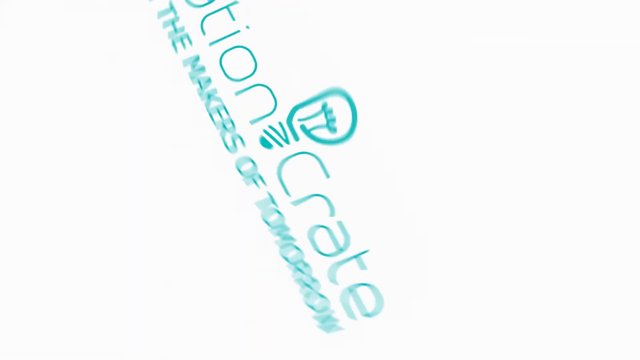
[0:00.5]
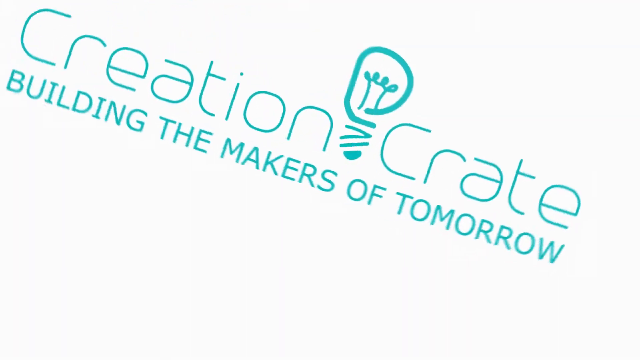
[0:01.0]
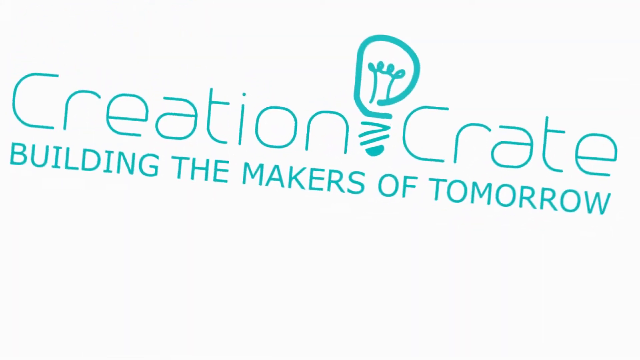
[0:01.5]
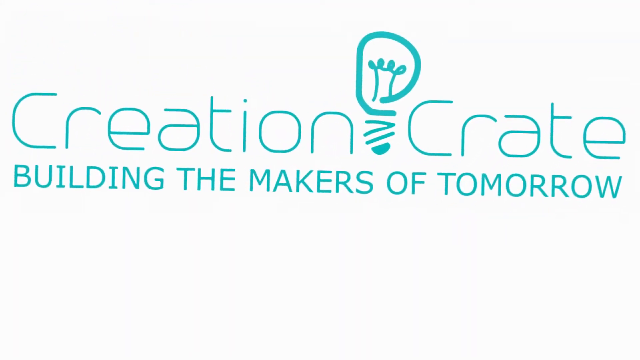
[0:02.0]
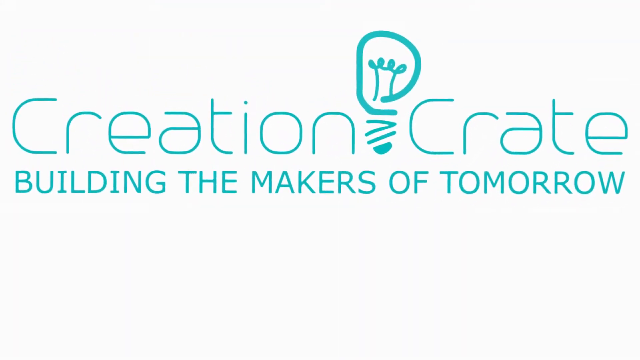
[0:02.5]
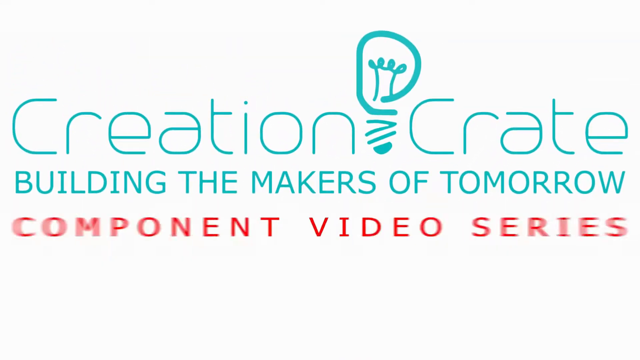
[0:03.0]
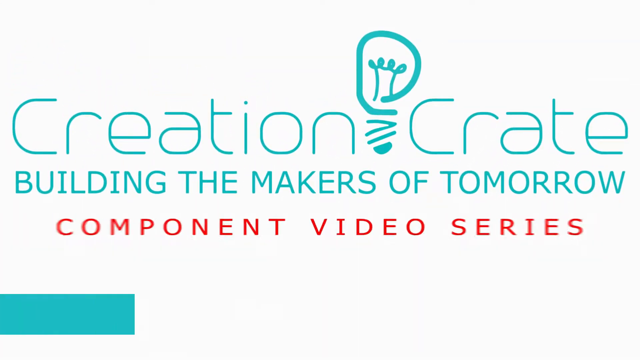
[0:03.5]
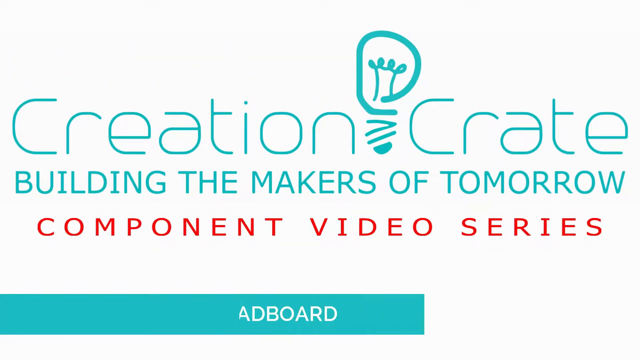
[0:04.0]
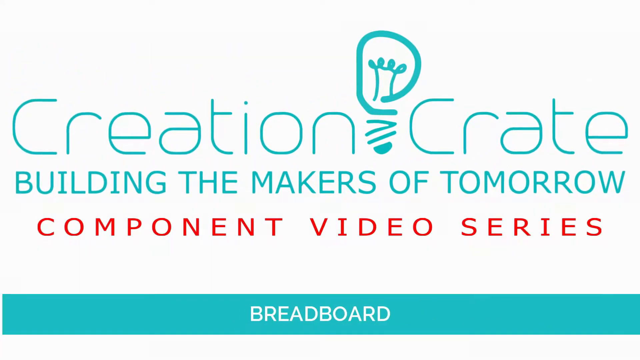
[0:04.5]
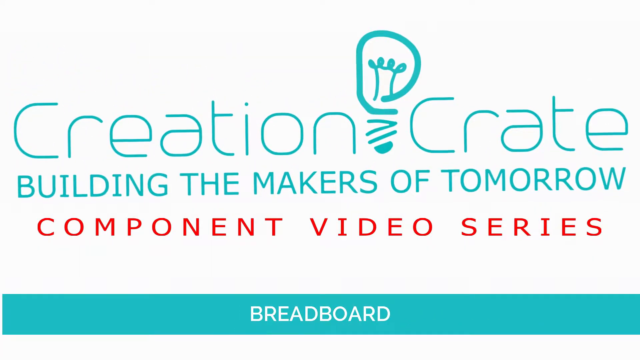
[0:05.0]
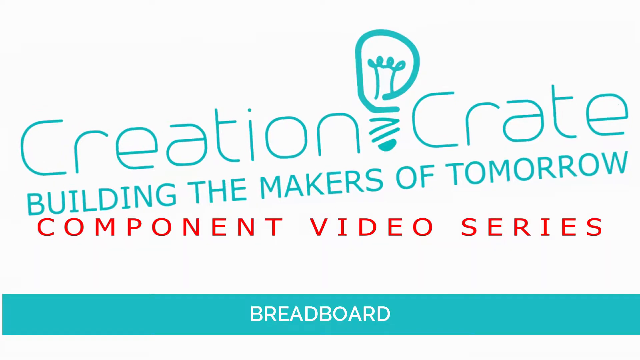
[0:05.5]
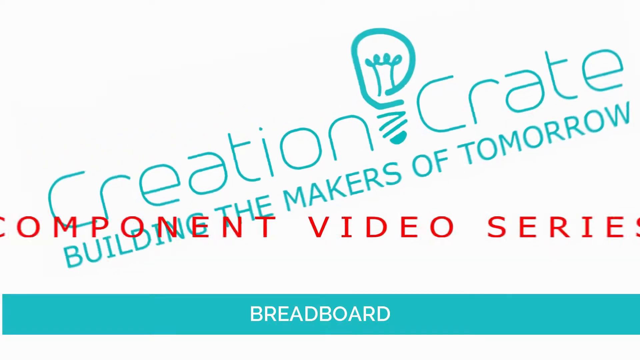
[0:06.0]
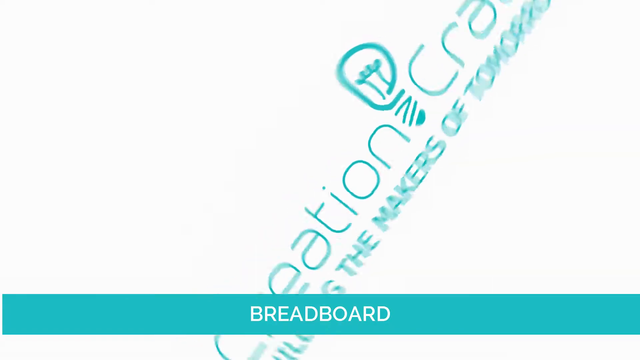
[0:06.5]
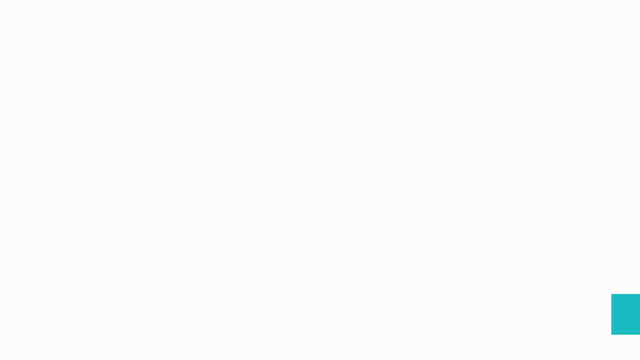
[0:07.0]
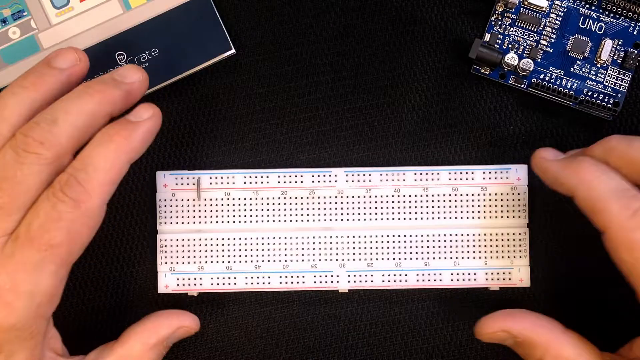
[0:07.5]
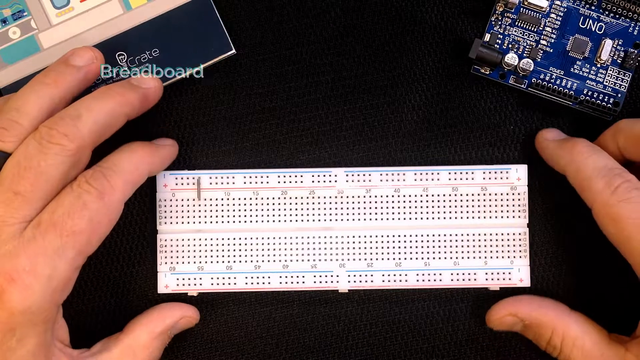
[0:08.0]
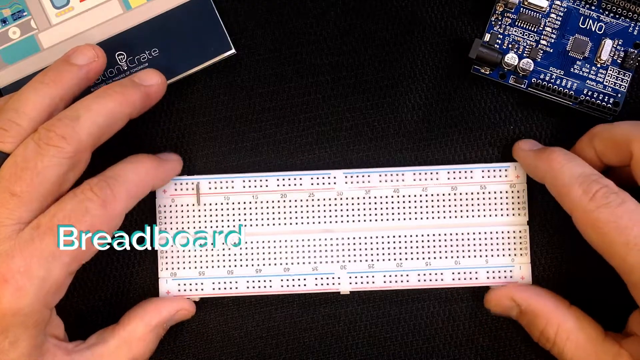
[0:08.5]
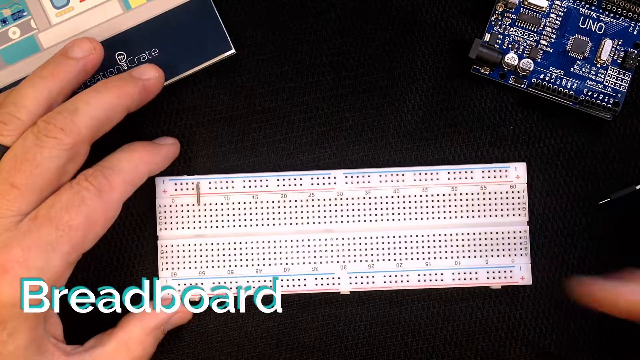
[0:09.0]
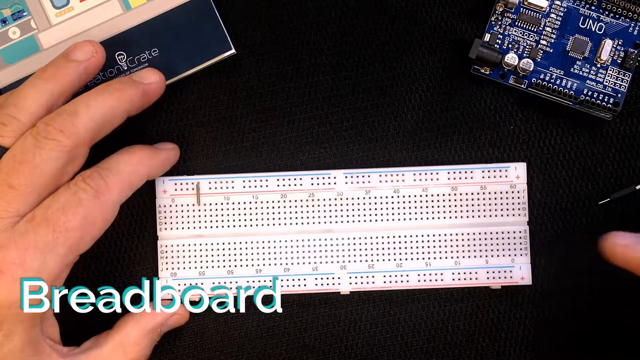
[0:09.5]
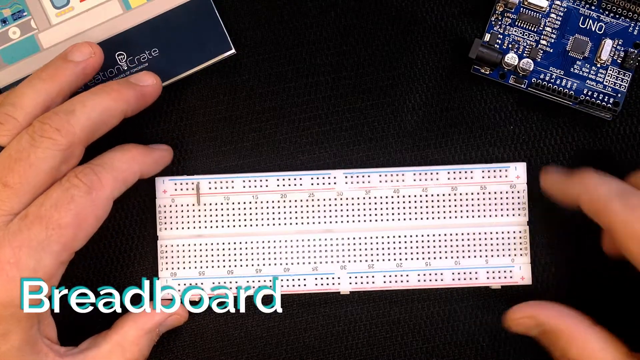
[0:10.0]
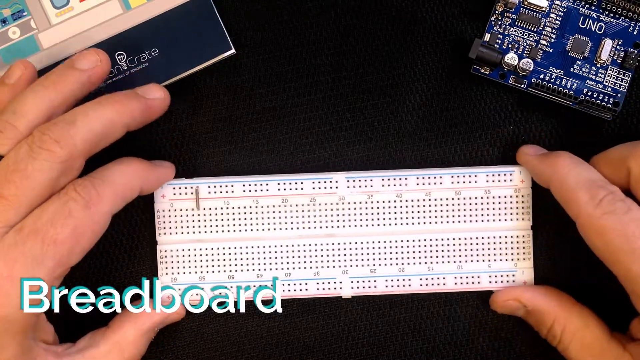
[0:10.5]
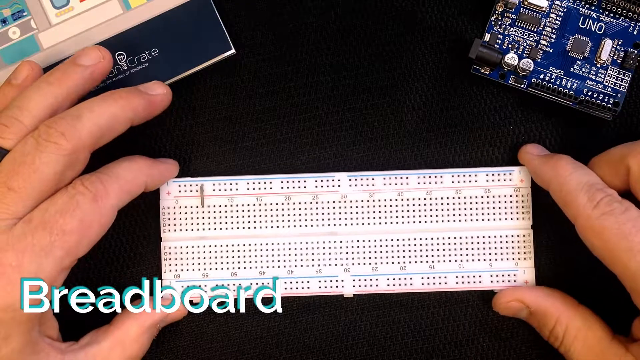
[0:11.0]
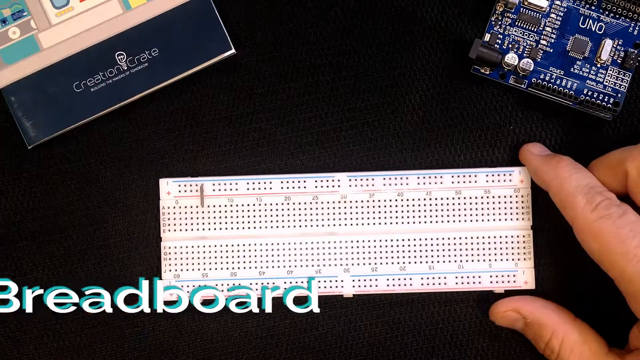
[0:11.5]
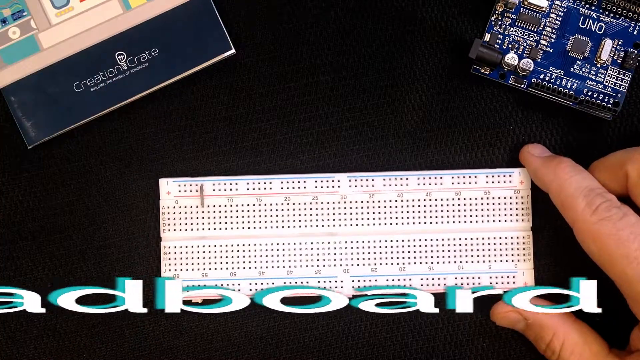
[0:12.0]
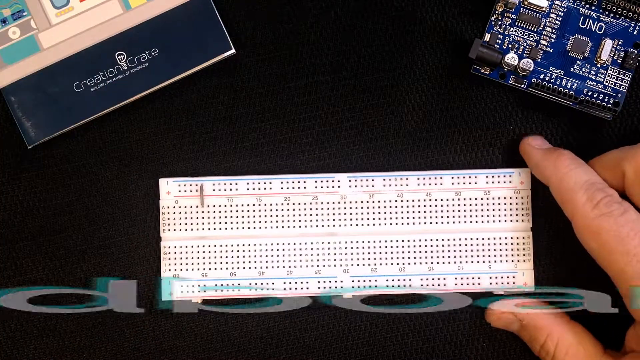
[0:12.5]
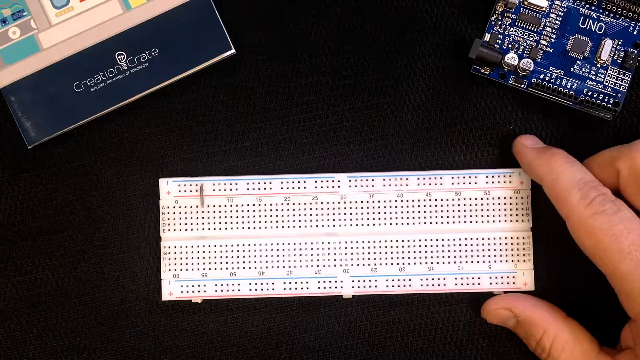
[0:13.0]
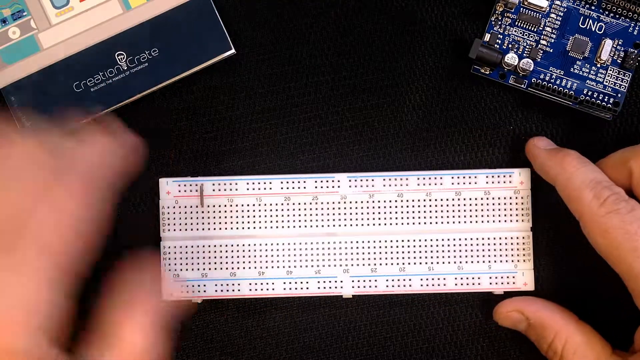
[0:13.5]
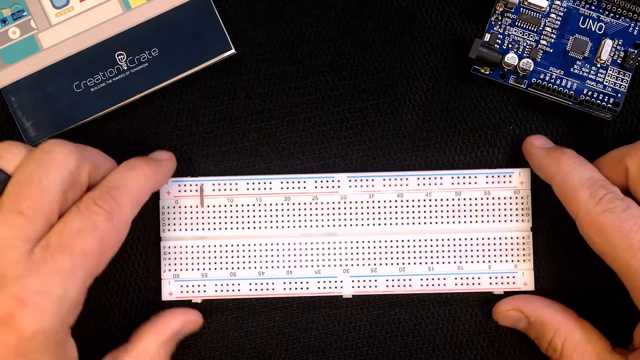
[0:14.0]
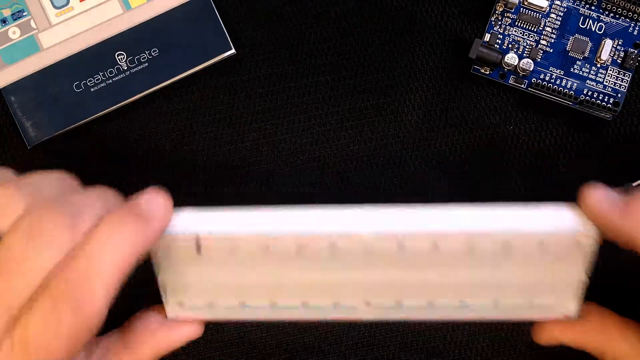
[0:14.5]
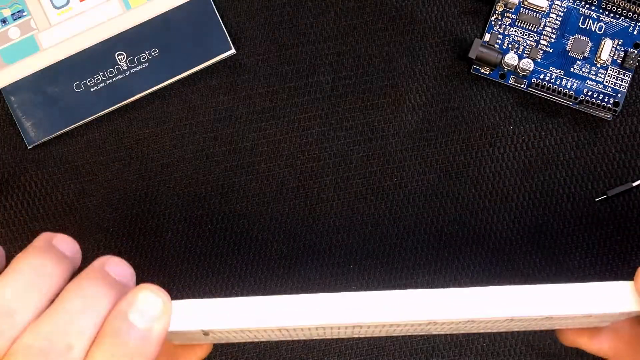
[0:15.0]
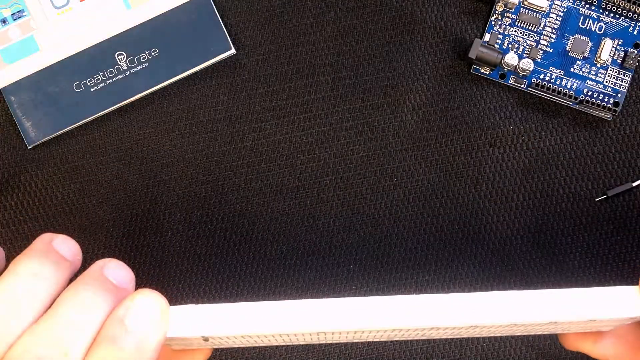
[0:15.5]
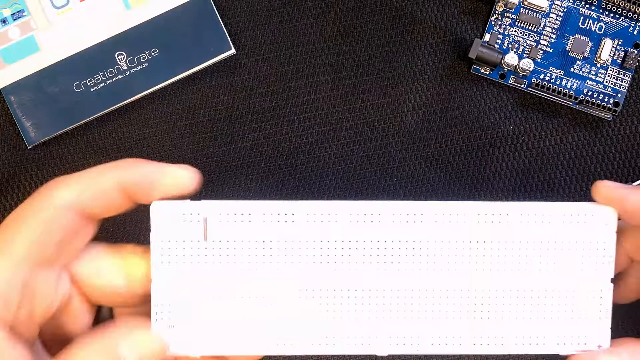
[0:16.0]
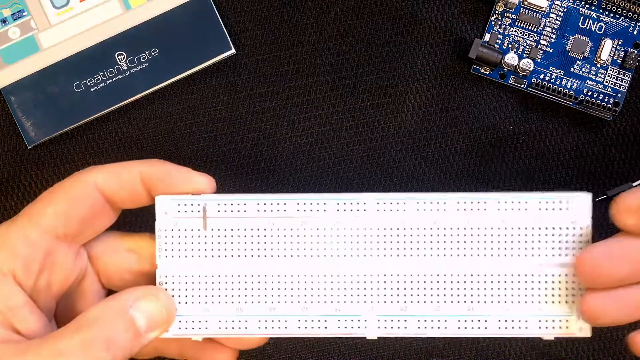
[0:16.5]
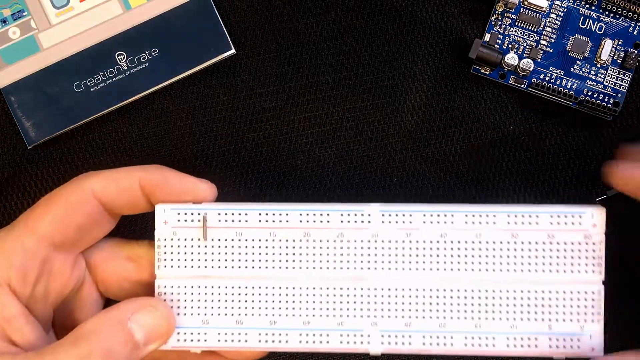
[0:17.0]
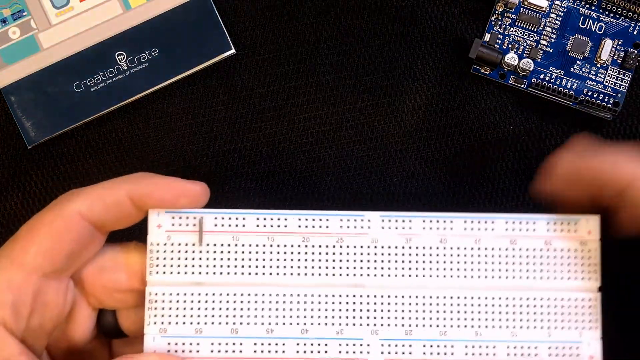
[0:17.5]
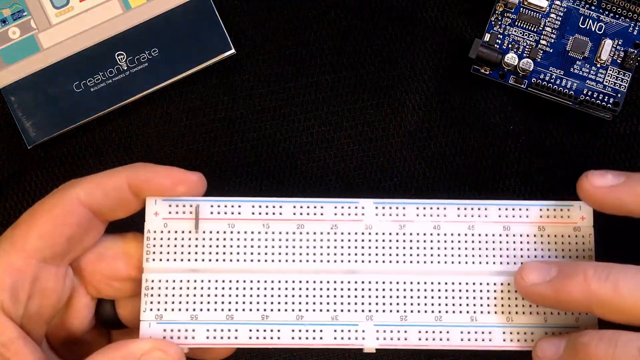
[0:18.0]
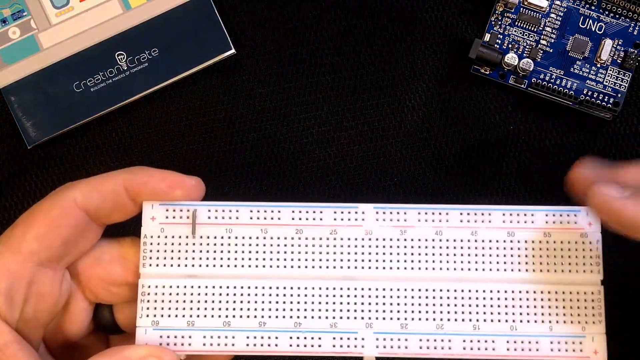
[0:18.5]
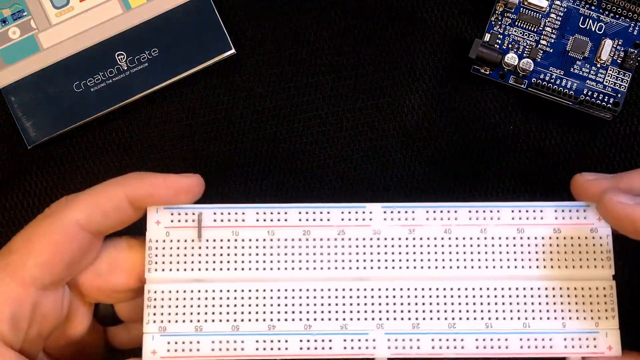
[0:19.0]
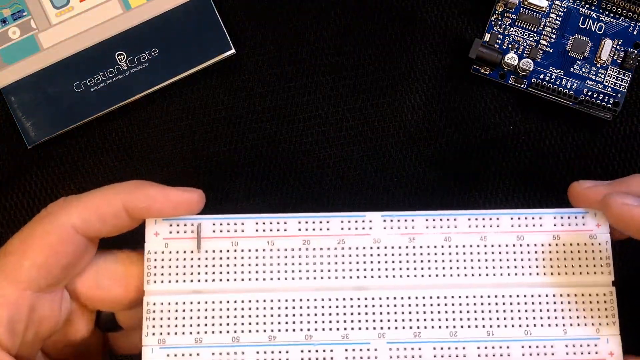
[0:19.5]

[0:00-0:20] A breadboard with different components is shown. It has a number of sections, each numbered: 0, 5, 10, 15, 20, 25, 30, 35, 40, 45, 50, 55 and 60. Beside the numbers are the letters A, B, C, D and E, and below them, in different sections, are the letters G, H, I and J. The background is black, or dark, and a panel in the top right corner of the screen has "UNO" written on it. In the left corner is "creation crates".